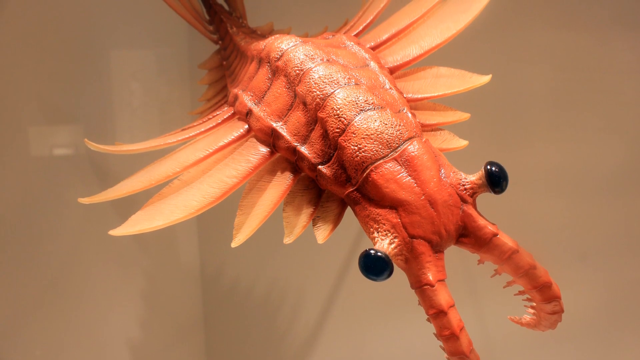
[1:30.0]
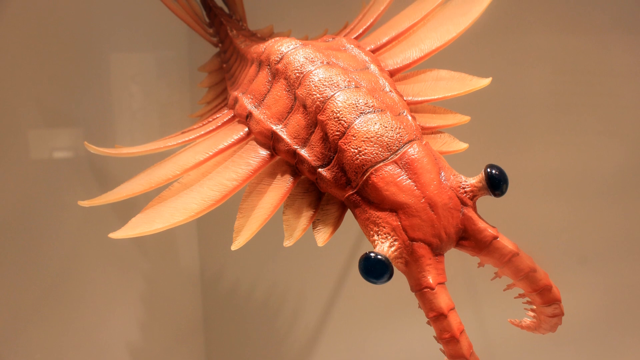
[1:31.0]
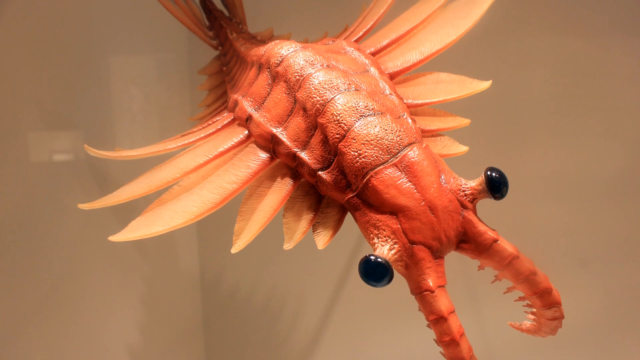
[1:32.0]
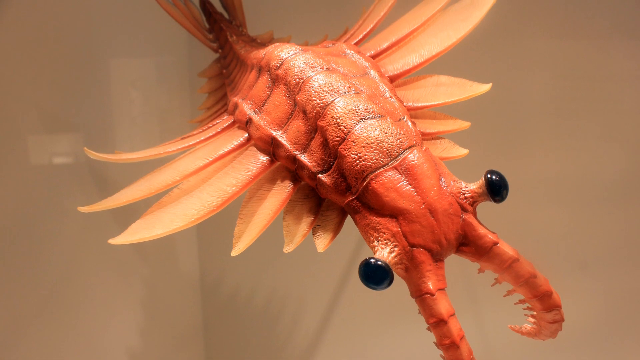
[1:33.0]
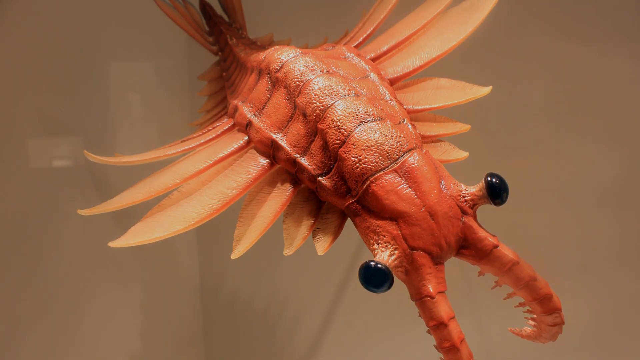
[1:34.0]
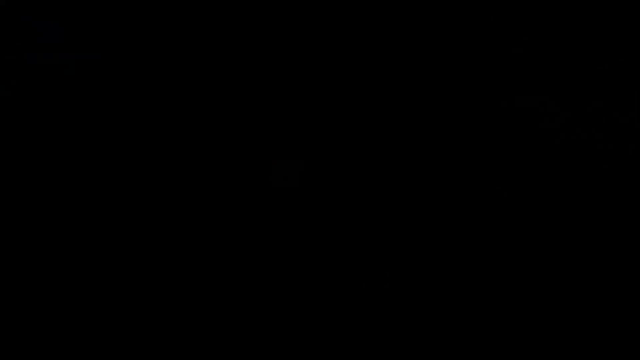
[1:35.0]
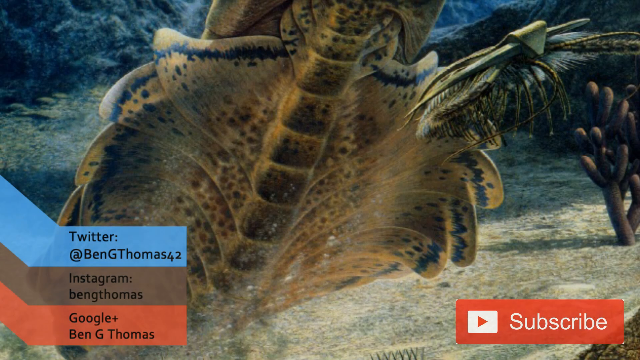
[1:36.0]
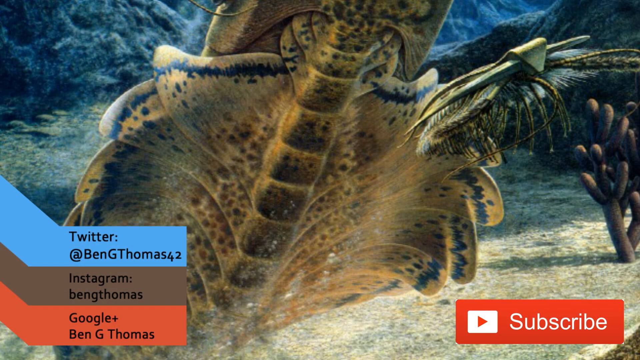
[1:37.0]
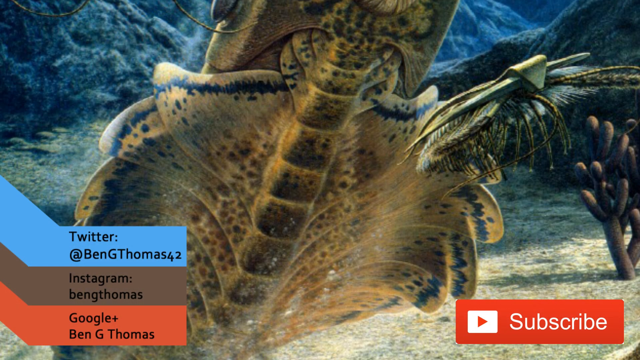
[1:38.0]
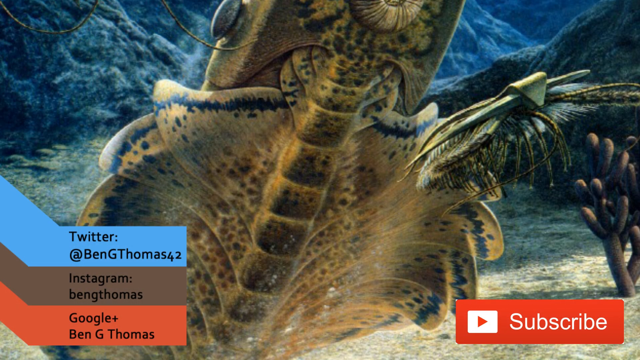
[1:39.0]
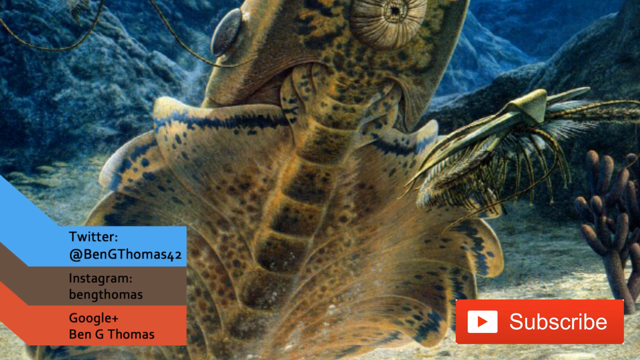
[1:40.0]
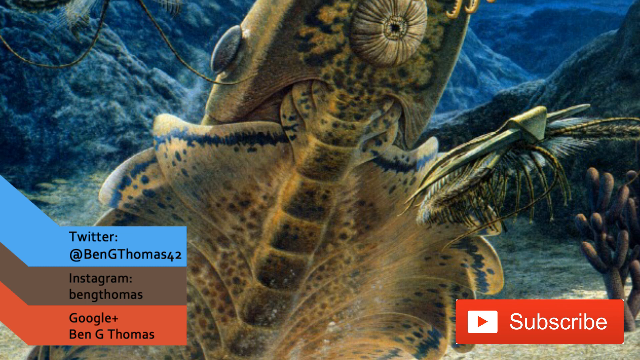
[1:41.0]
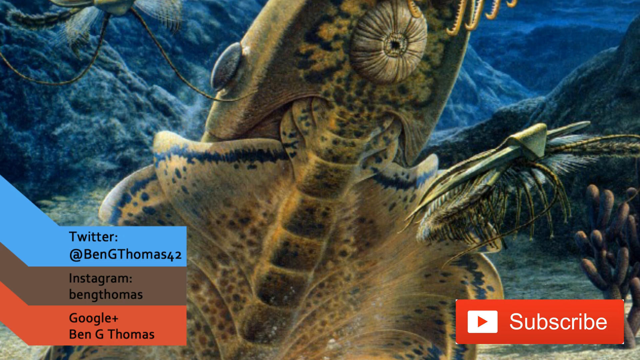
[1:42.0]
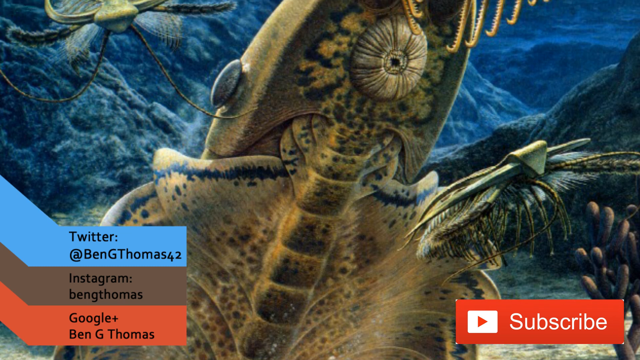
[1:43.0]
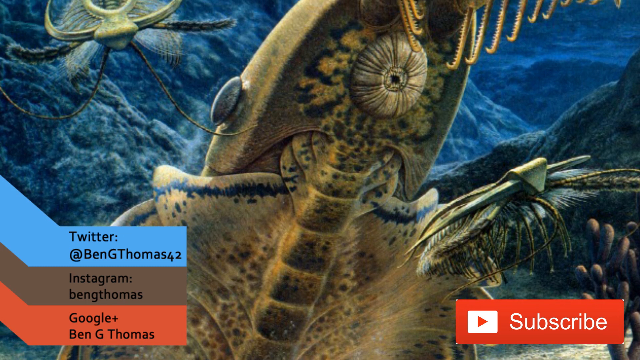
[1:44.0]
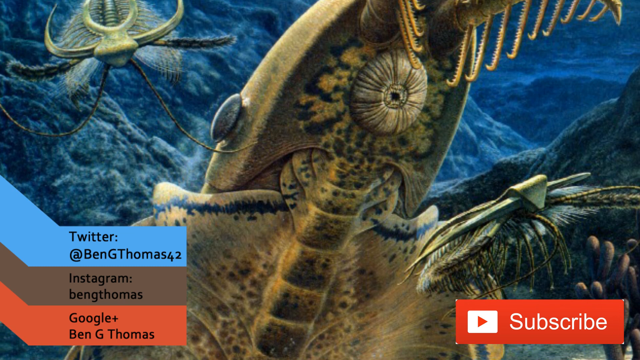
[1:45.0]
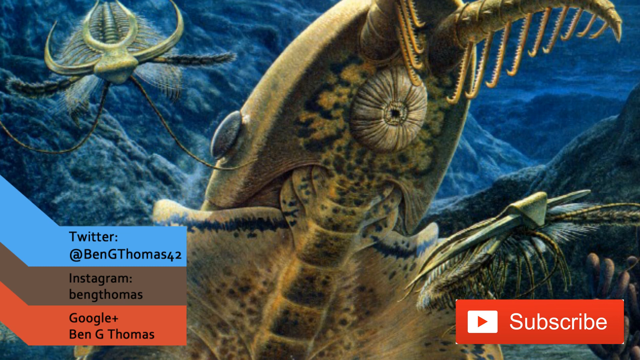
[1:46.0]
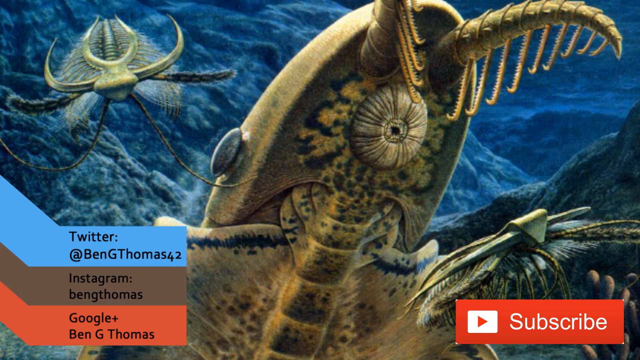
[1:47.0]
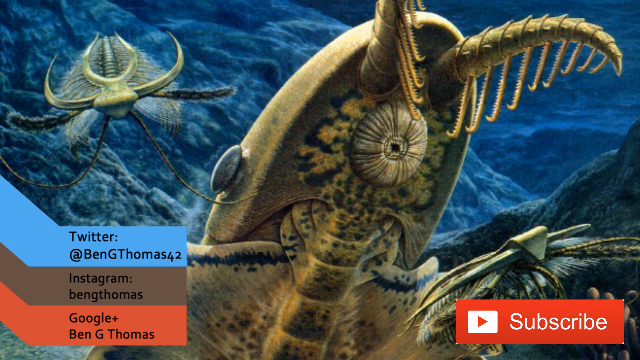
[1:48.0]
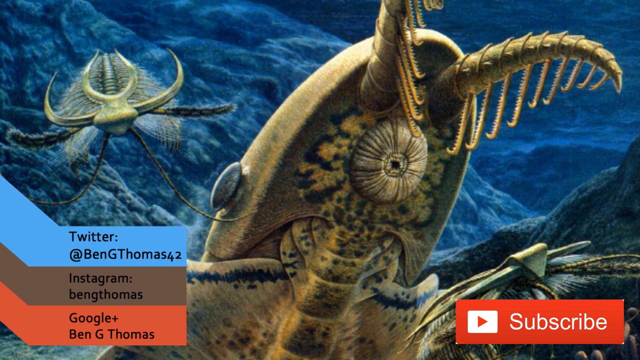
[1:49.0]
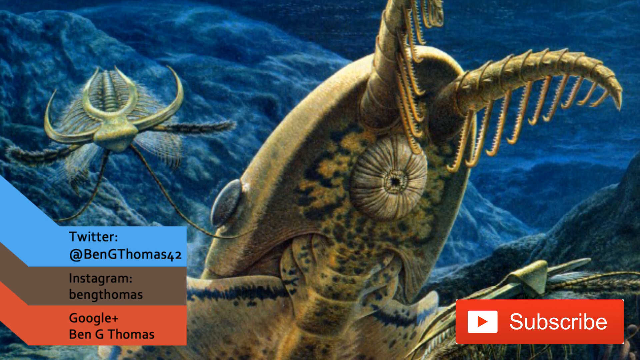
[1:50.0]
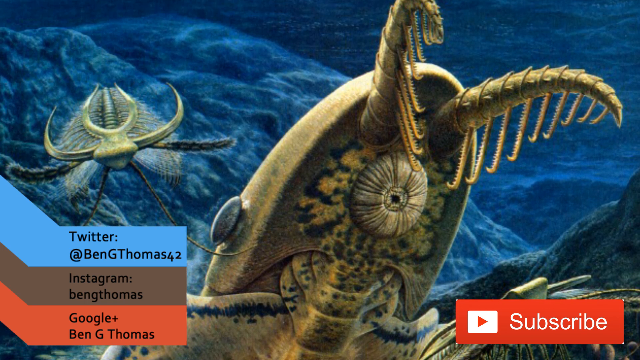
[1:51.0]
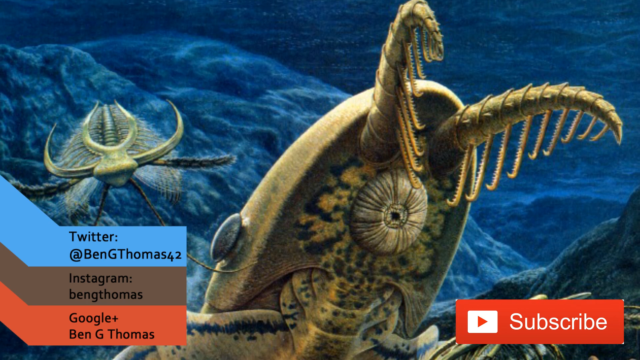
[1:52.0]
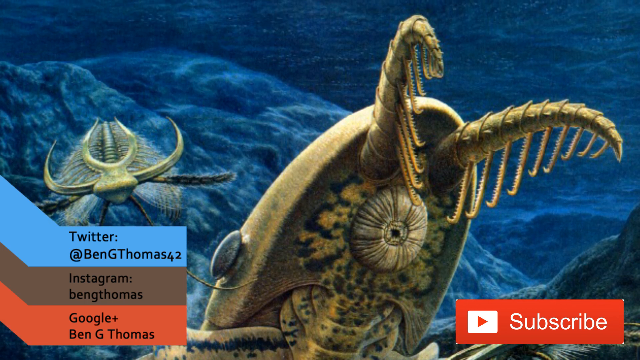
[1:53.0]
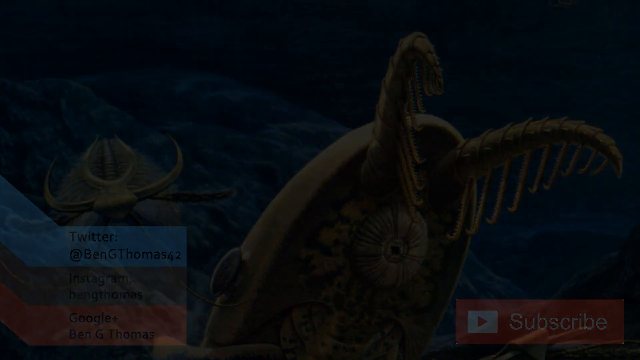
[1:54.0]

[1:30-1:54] The sea creature appears to be on display inside a laboratory, and it looks like it is contained in a clear glass container. It looks more reddish orange, with a reddish-orange body with darker red detailing. Light orange fins shaped like flower petals are attached to either side of its body, at least six on each side; they are smaller toward the head and gradually increase in length toward the back end. The creature's head is square-shaped, with two stems on either side of it, and two button-shaped black eyes are attached to these stems. There appear to be two tentacles growing from its face, sort of in the nose area; the sections of these tentacles are visible, and smaller tentacles hang from underneath the larger ones. The camera moves around, then the screen turns dark, and the view returns to sea creatures at the bottom of the sea. What looks like a centipede is in the lower left, and a larger sea creature is toward the middle. The creature's eye, which looks like a black button, is on the left side, and its underbody is visible. It looks like it is rising up out of the sea. In the background, the sea water is shades of dark, medium, and light blue, representing the waves. Toward the right side, the creature in the middle may be propelling its body up by pushing against some rocks that appear to border the water.